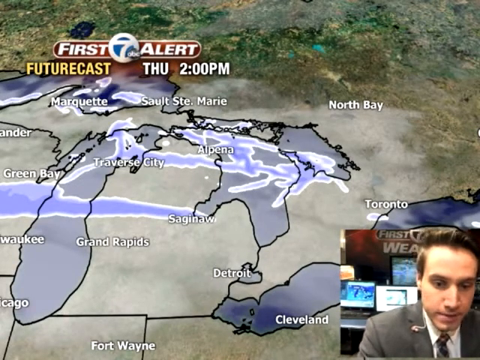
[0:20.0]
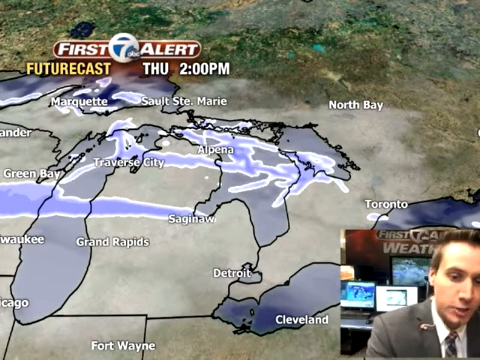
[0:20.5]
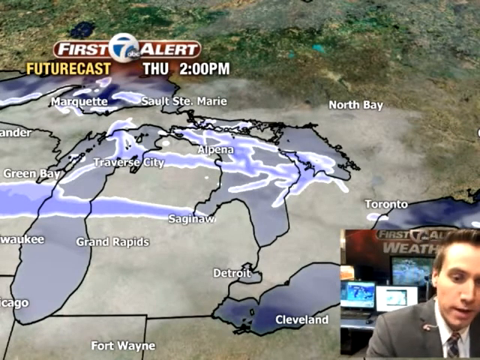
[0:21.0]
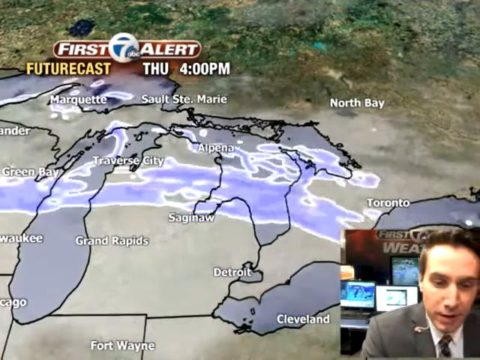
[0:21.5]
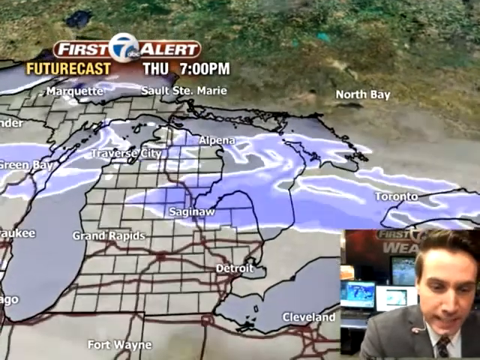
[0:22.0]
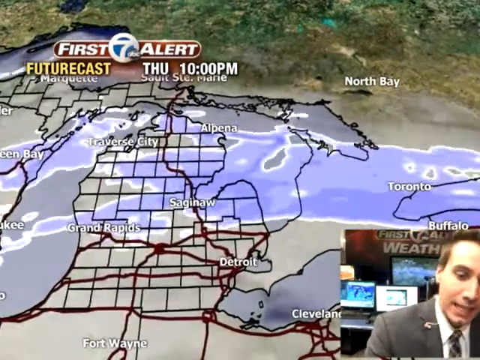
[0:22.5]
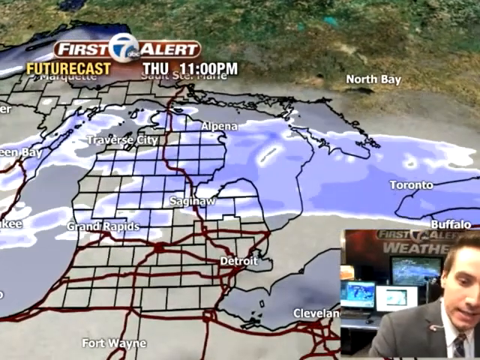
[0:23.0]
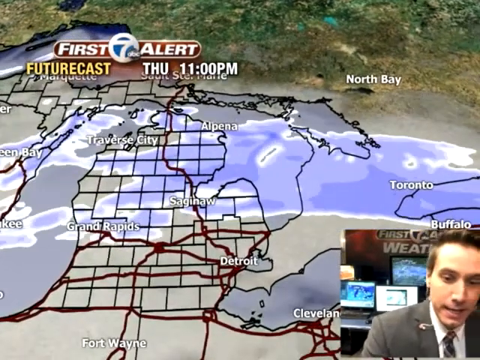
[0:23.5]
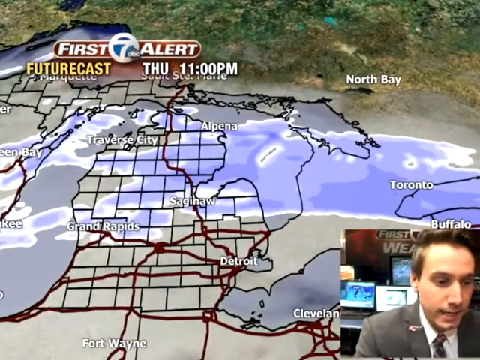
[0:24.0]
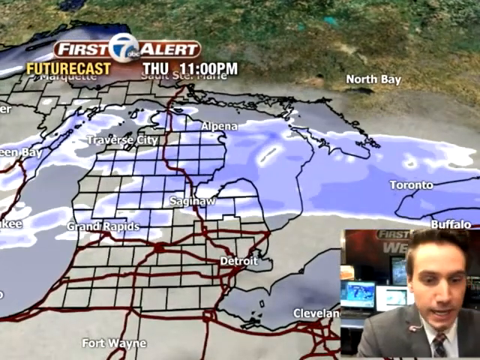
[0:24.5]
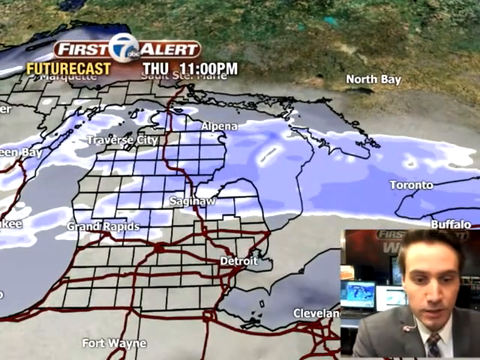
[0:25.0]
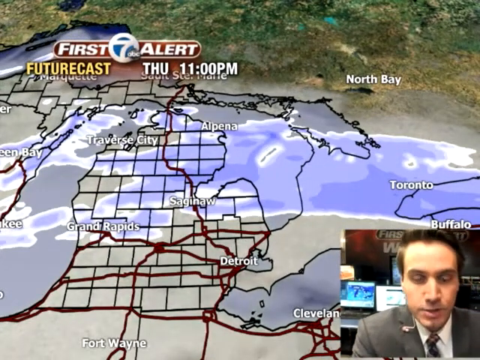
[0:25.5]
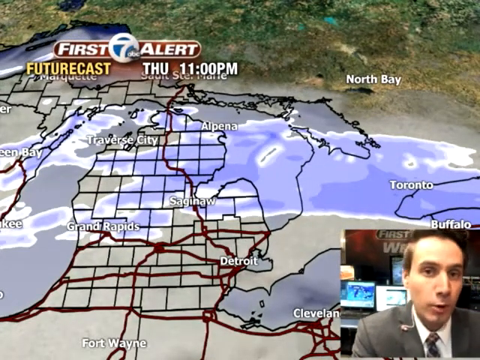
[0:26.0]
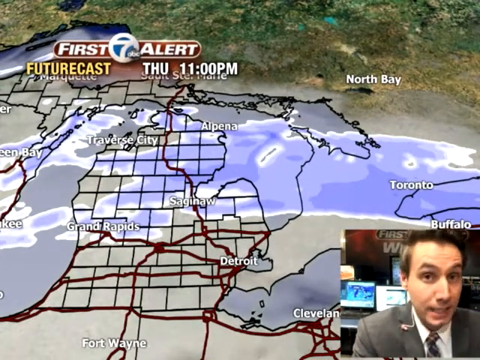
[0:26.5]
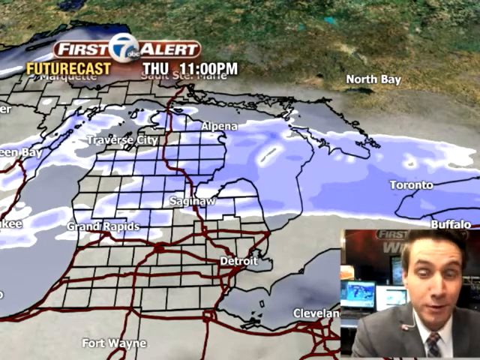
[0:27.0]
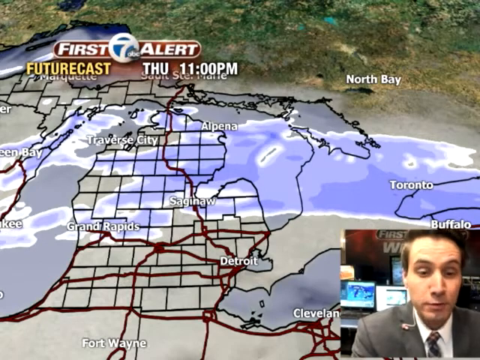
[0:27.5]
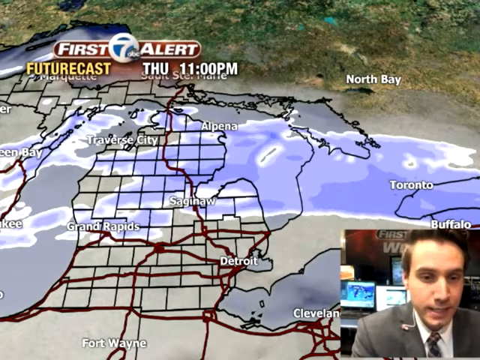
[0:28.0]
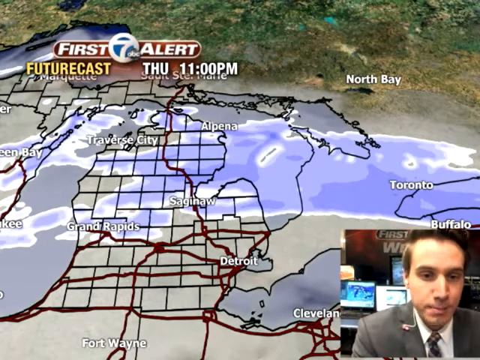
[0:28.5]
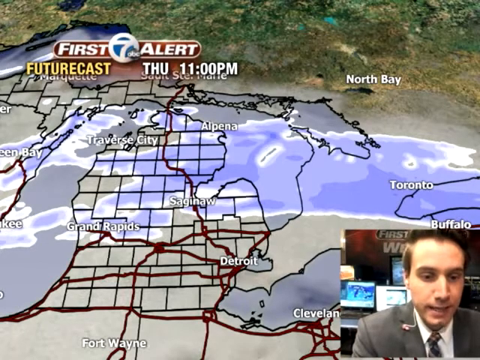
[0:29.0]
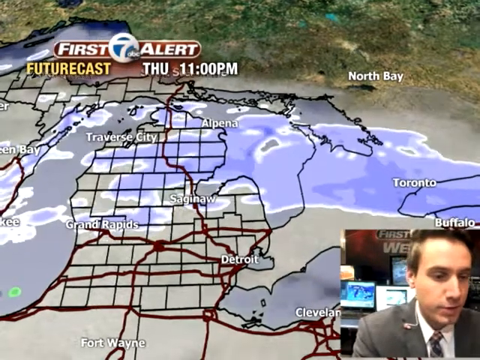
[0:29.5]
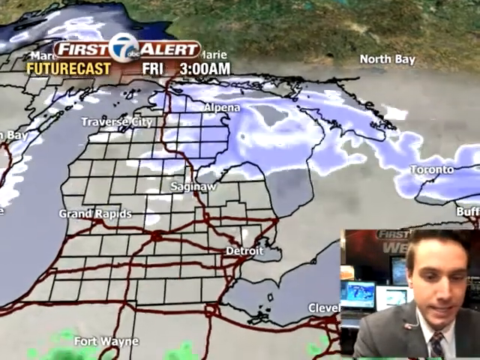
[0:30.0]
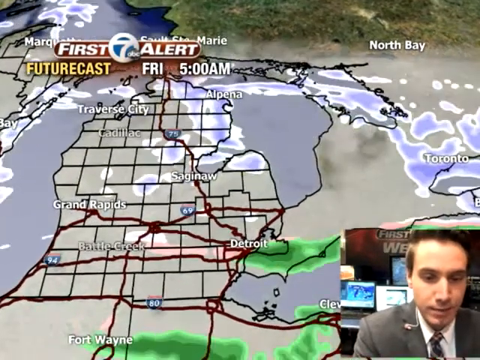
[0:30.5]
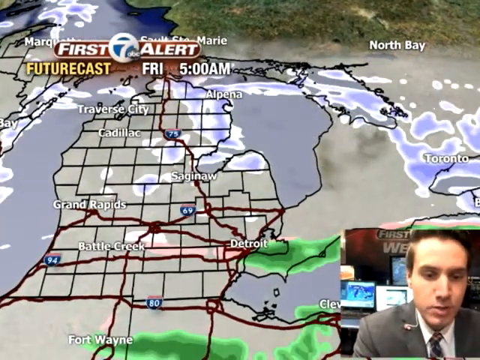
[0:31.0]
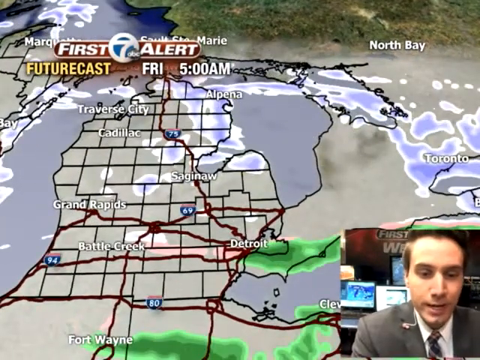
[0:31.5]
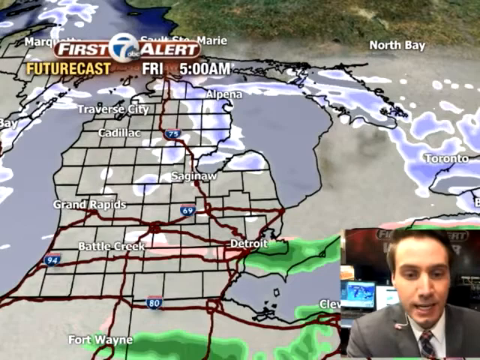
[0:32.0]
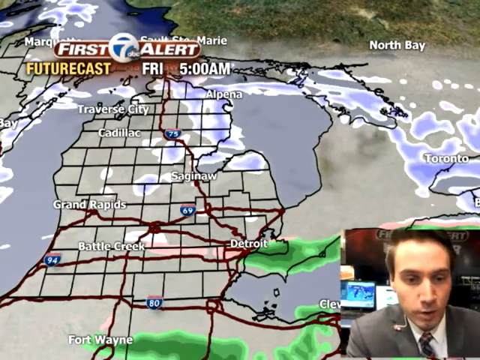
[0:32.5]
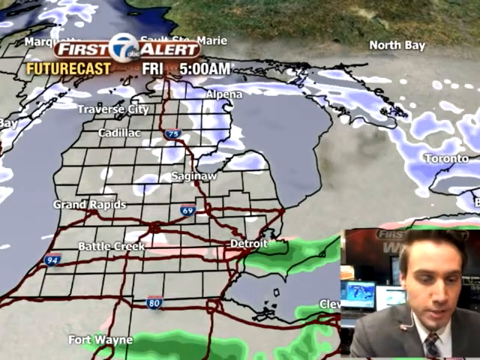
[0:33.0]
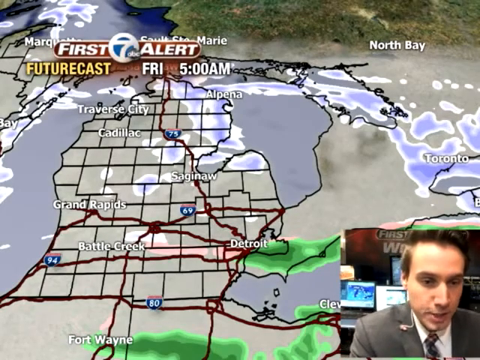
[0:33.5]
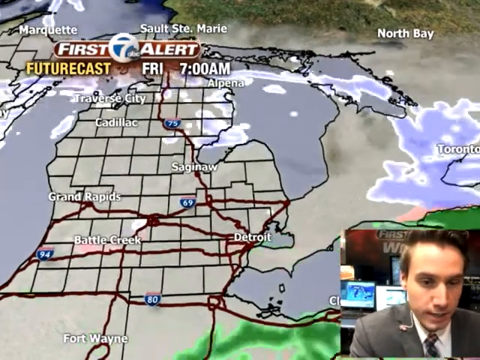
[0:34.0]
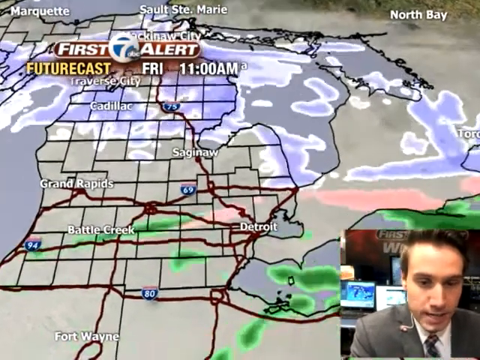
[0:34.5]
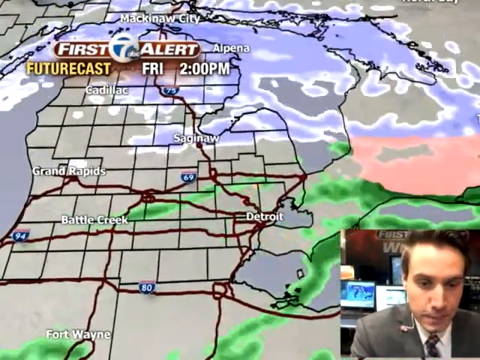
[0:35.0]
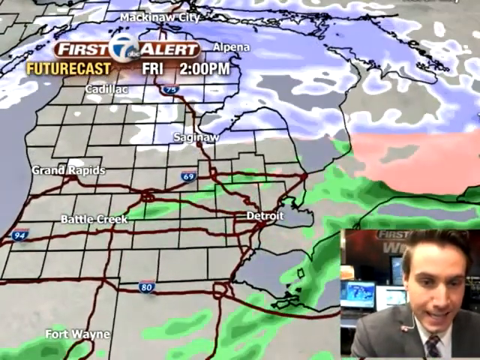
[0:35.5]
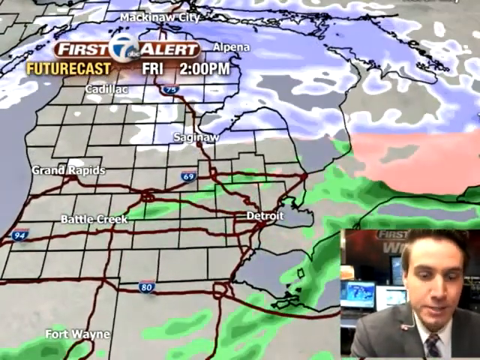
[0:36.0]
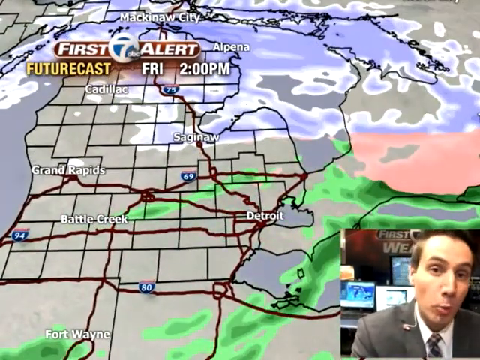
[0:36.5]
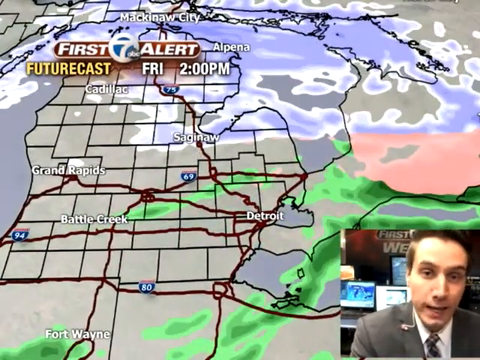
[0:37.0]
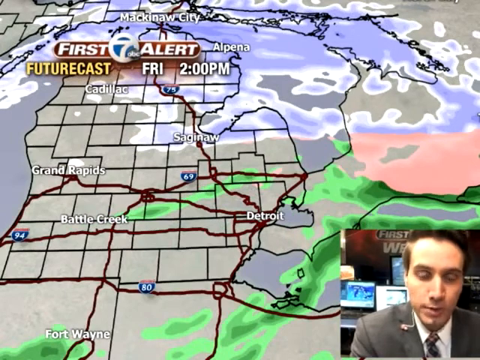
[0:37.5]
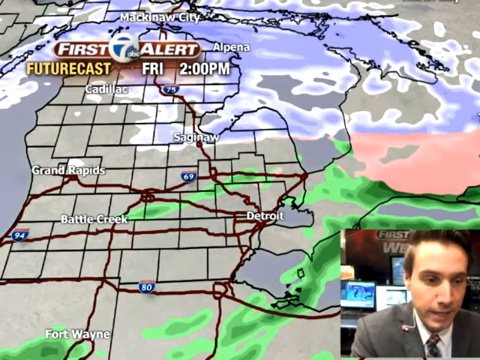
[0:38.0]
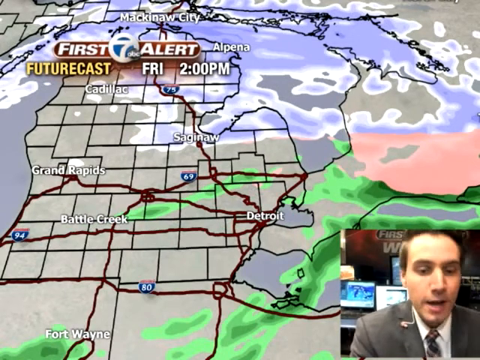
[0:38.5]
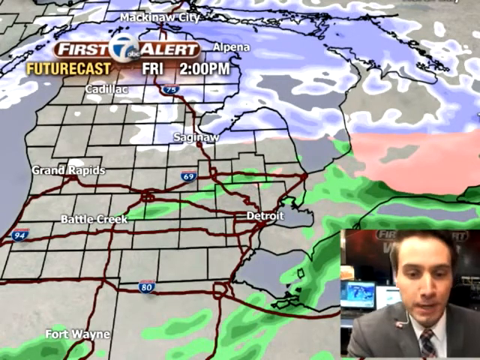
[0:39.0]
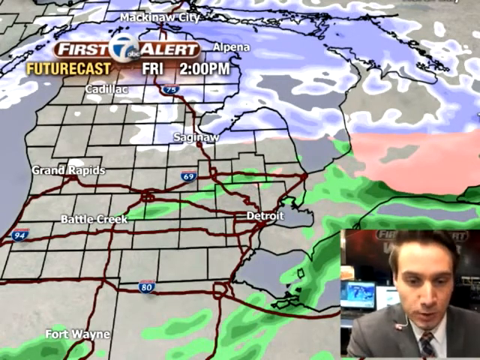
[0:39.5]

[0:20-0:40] The forecast covers Thursday from 3pm up to 11pm. The map shows different areas in different colours, including the area around Green Bay, where a colour appears from 2pm. Detroit and Toronto are also shown. The station seems to be from Canada, and the map shows the rest of the North American countries.